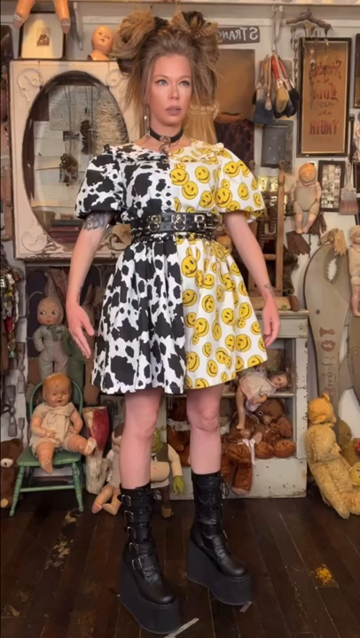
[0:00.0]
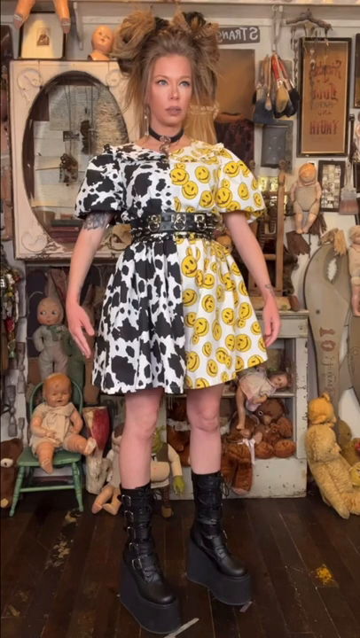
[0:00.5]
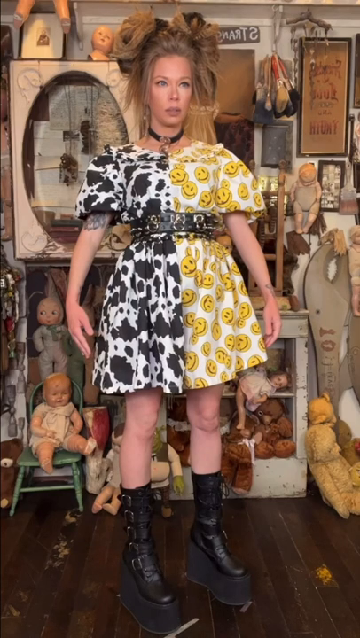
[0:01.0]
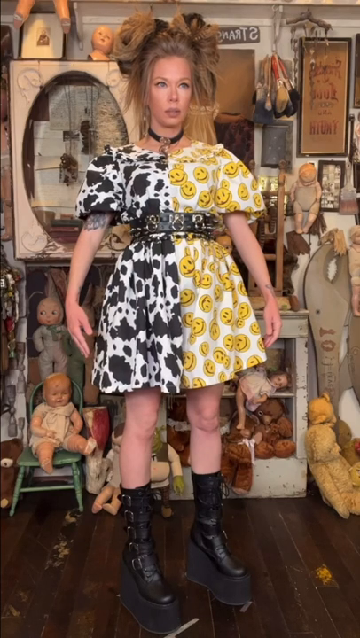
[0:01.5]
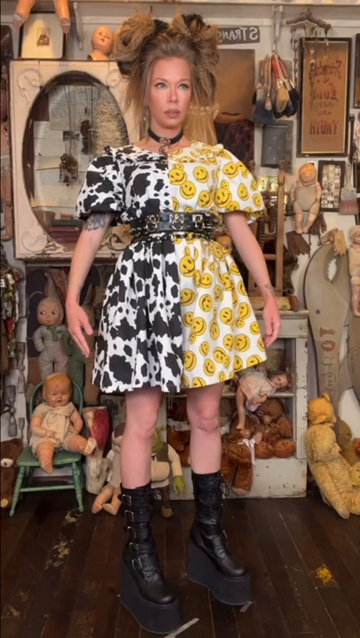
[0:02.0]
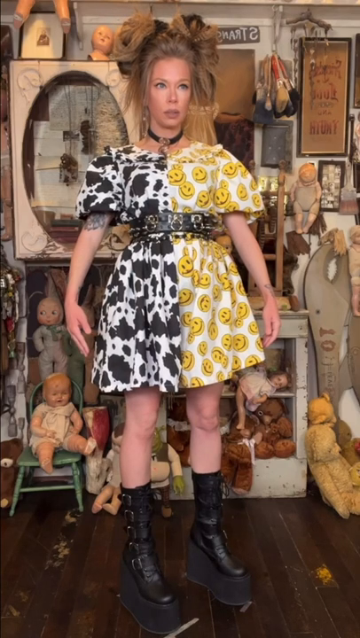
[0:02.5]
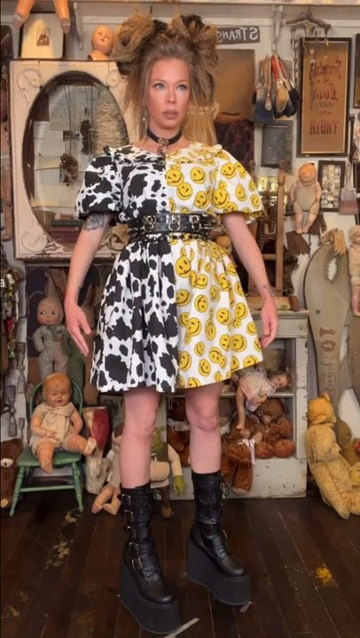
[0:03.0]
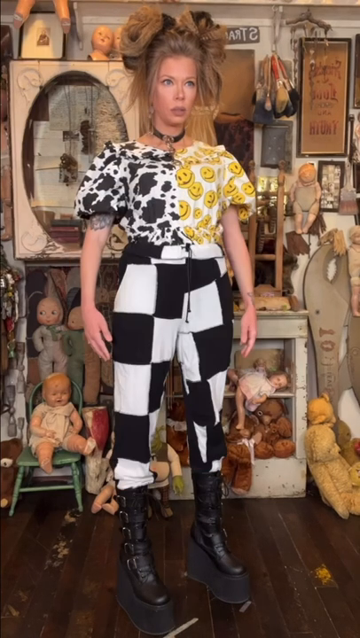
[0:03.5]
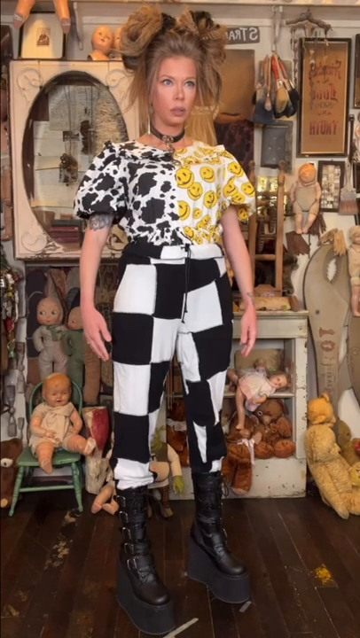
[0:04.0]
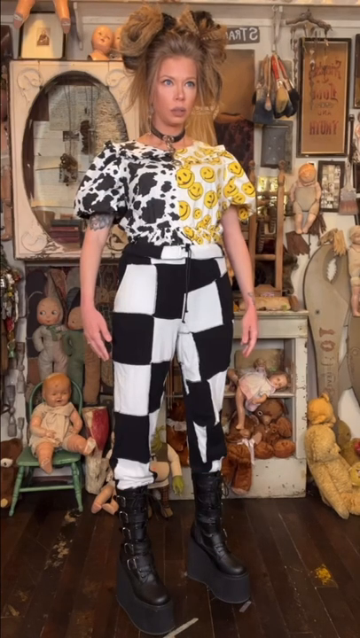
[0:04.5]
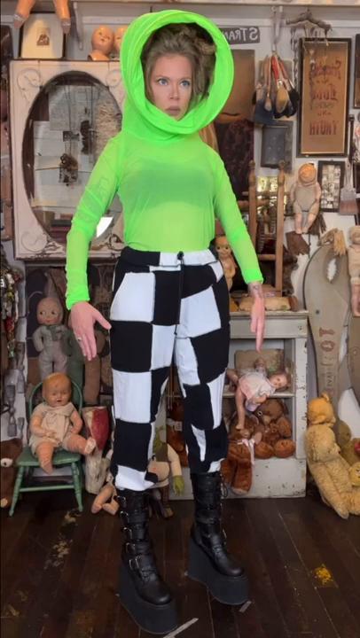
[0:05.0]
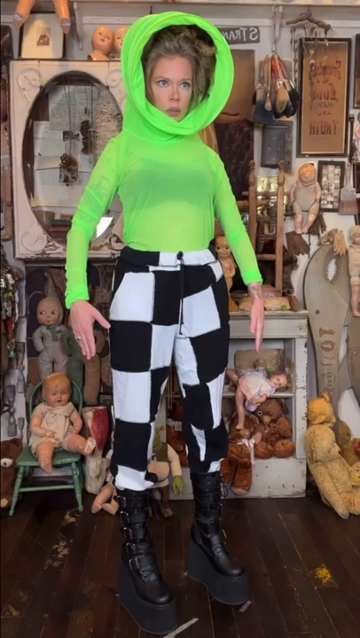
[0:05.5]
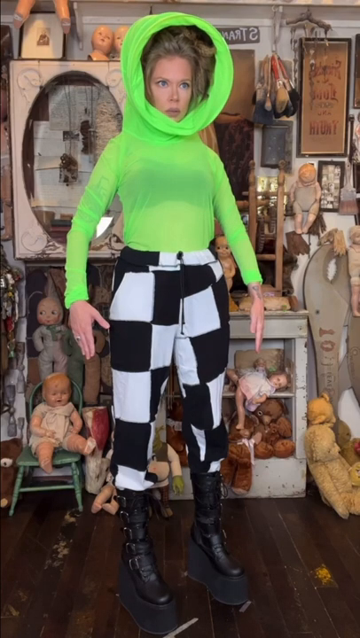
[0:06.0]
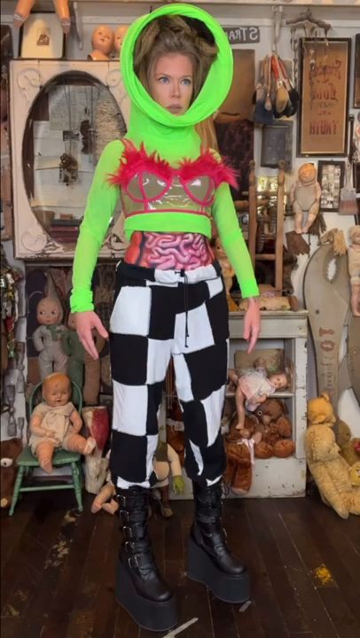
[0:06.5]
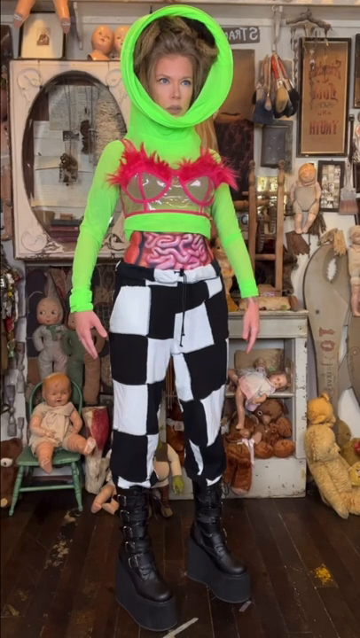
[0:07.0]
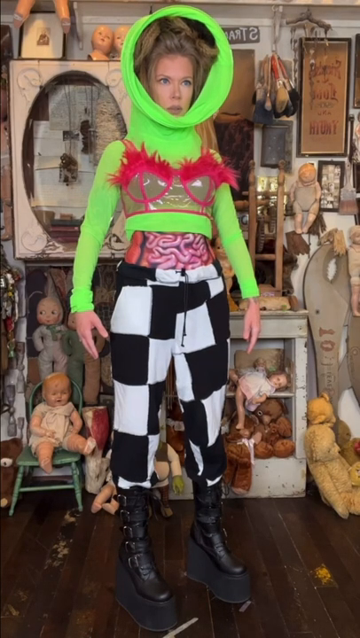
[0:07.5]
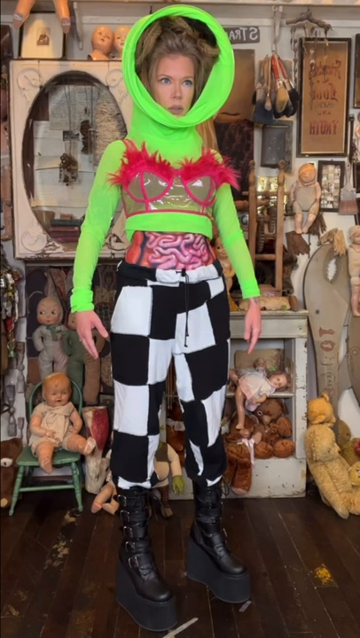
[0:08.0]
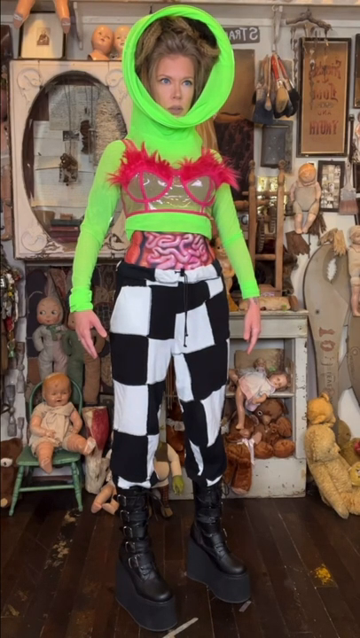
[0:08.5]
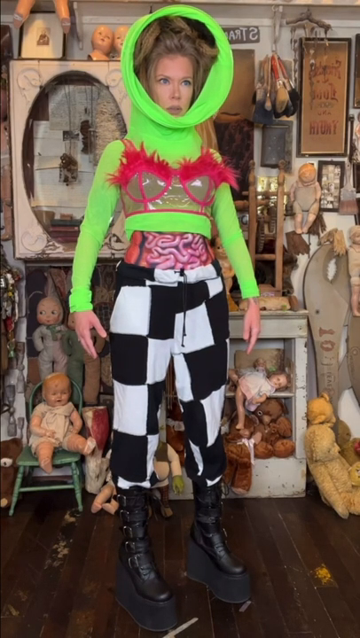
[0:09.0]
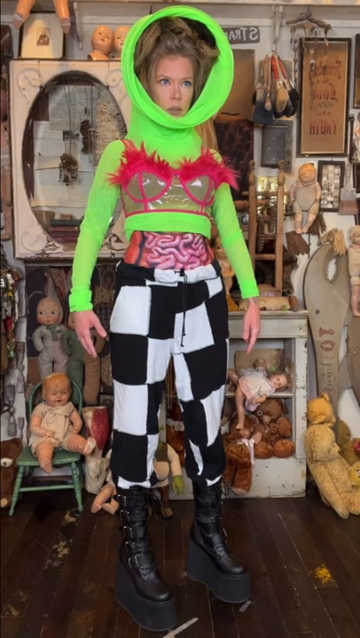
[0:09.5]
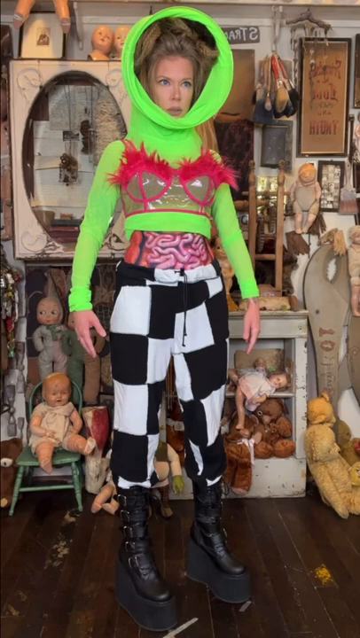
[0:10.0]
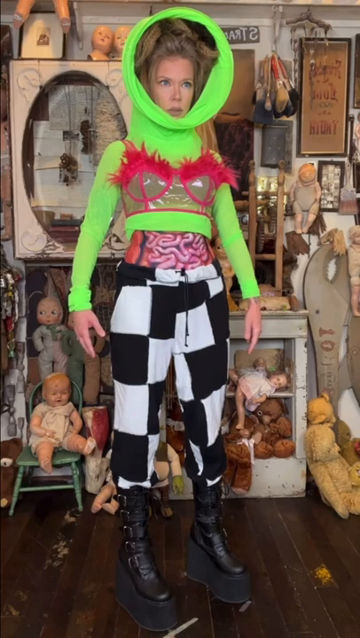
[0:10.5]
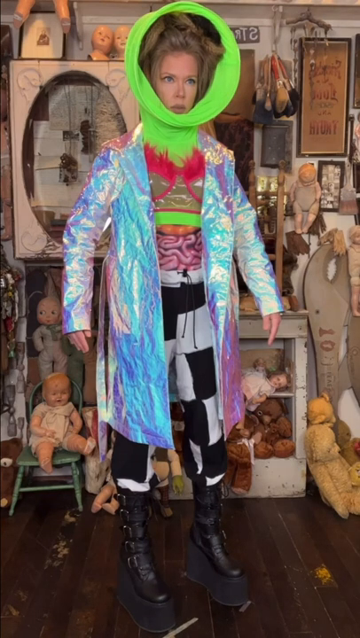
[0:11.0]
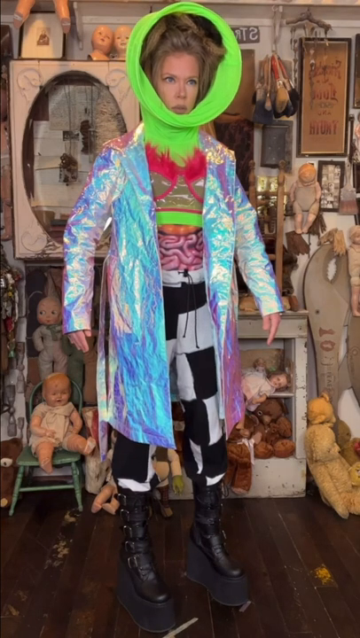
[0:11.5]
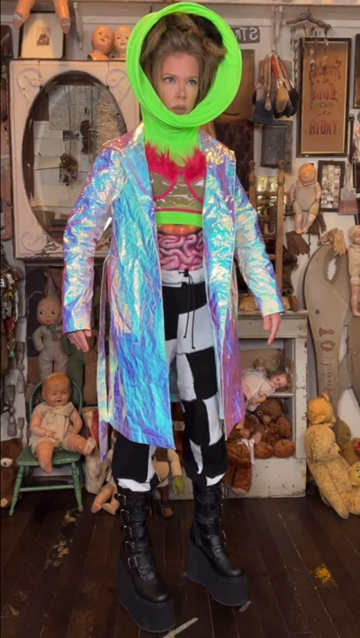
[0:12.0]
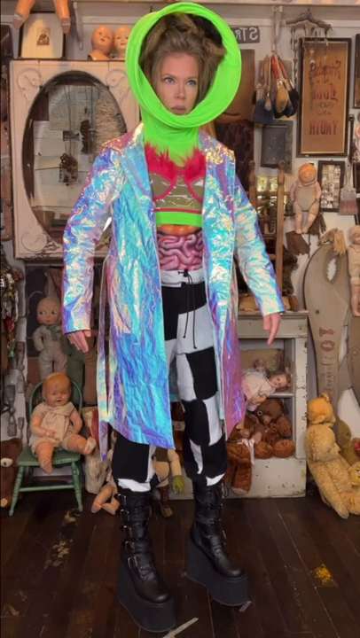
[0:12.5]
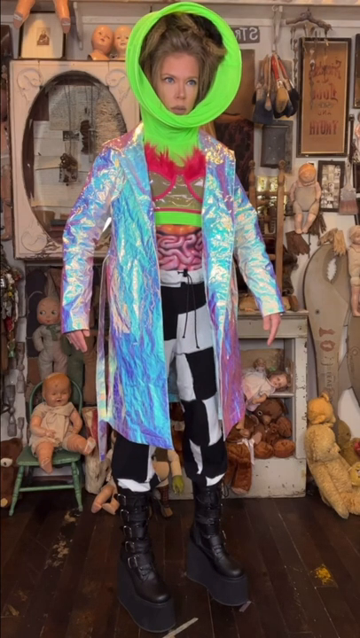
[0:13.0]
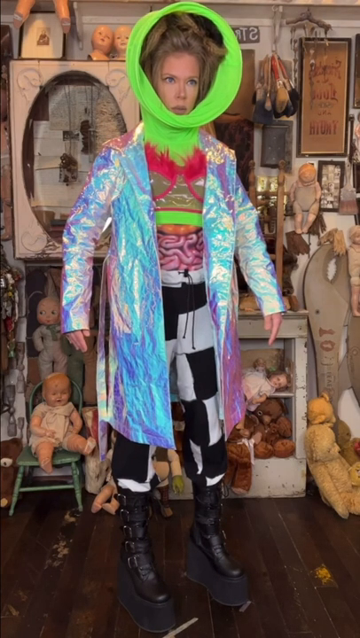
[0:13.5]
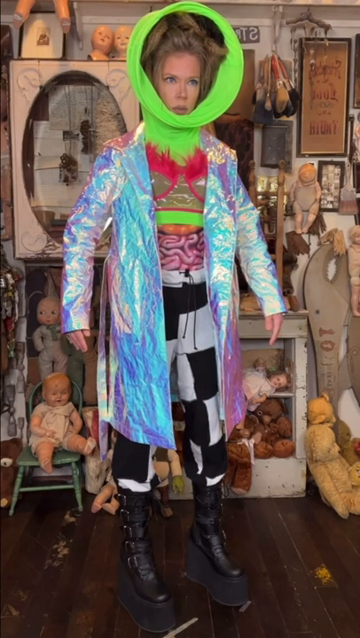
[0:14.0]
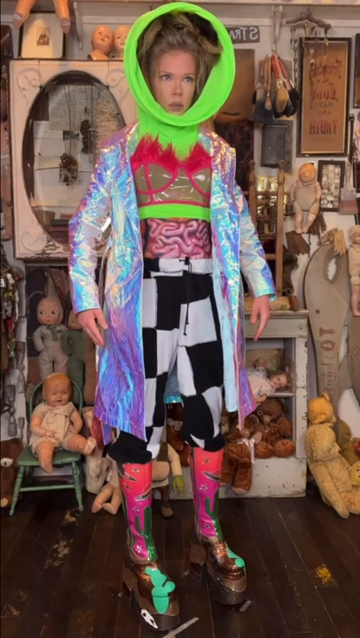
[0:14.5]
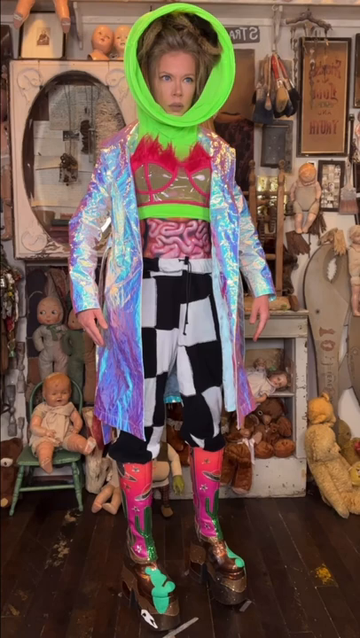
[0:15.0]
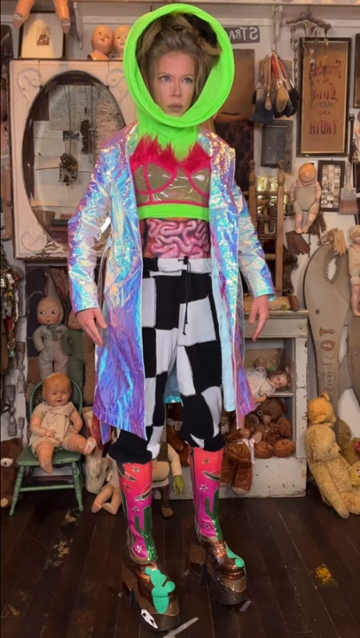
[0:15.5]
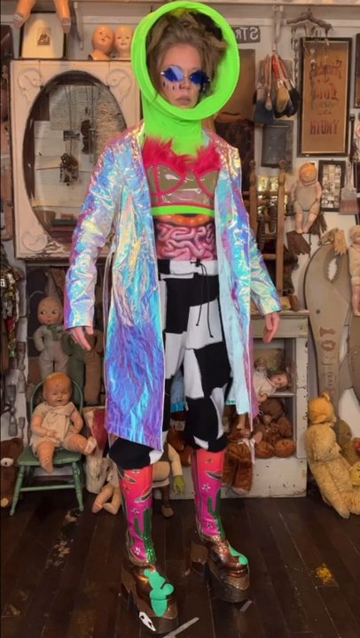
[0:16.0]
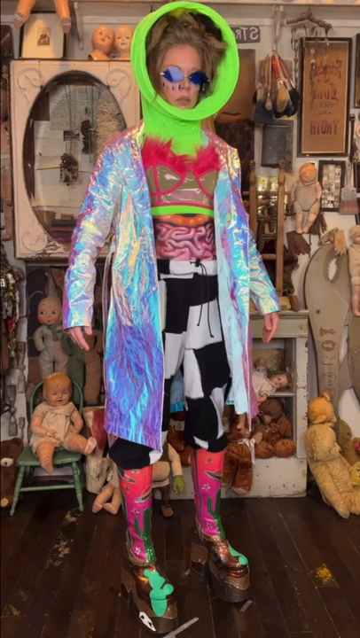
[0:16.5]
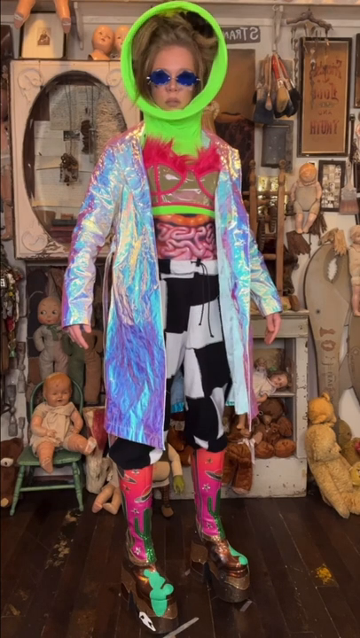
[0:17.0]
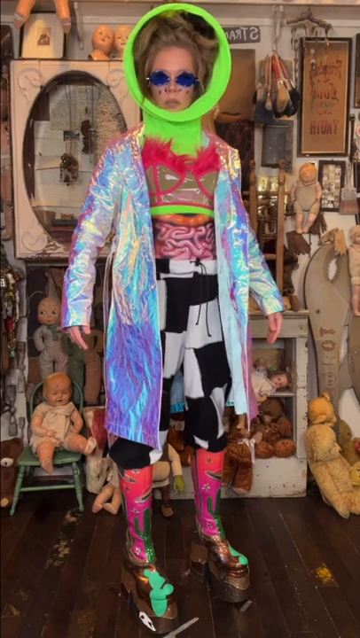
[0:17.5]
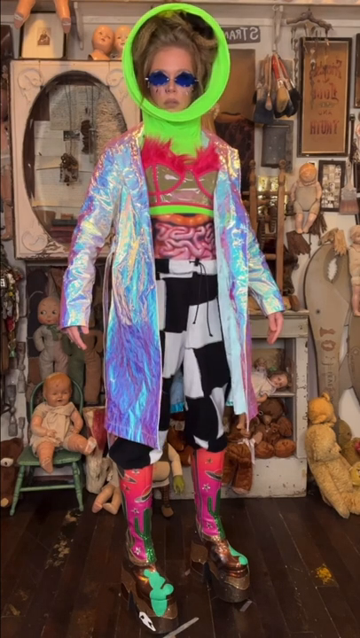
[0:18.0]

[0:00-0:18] A person wears a dress with two different sides: one side has yellow circle faces, and the other is a cow print with a belt that goes around the midsection. The costume then changes into a variety of different clothing that she puts on as the video changes. She wears black lace-up boots with a high heel. Her pants change to black checkerboard. She wears a lime green long-sleeve shirt that goes to the midsection, with a large hood over it. She wears a clear top that covers only her boob area, with red feathers. She puts on a silver long jacket that shimmers. In the background, baby dolls are sitting on the floor, lying on the floor, and sitting in a chair. There are baby heads on the picture frame in the background, and bears sitting next to a white cabinet. Her socks change to a tie-dye pink color.